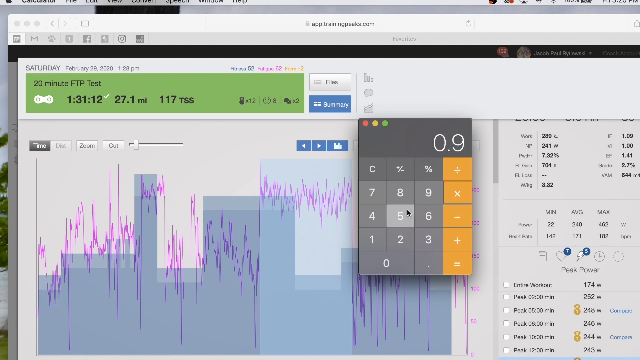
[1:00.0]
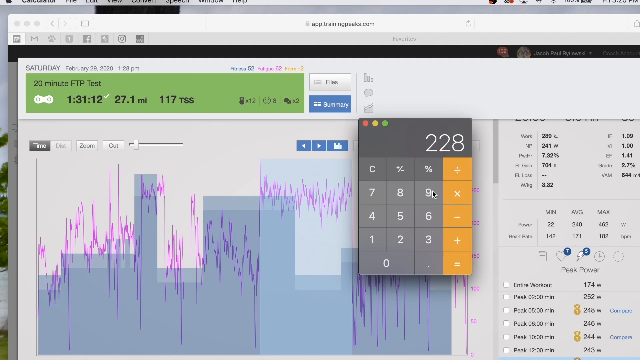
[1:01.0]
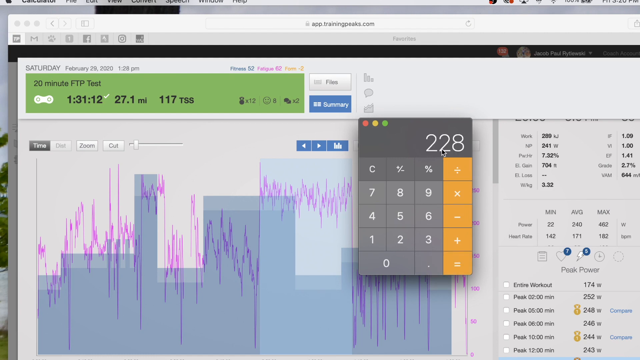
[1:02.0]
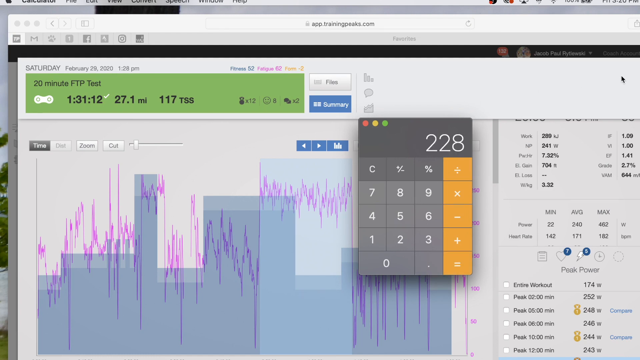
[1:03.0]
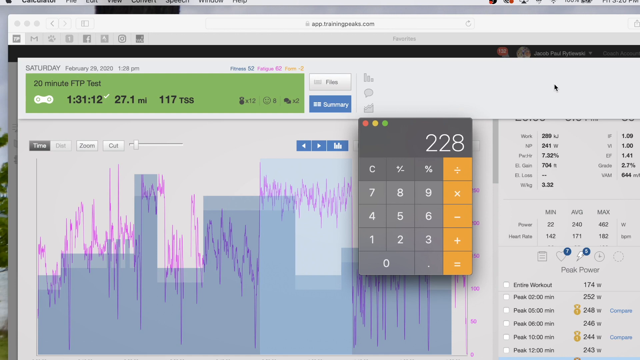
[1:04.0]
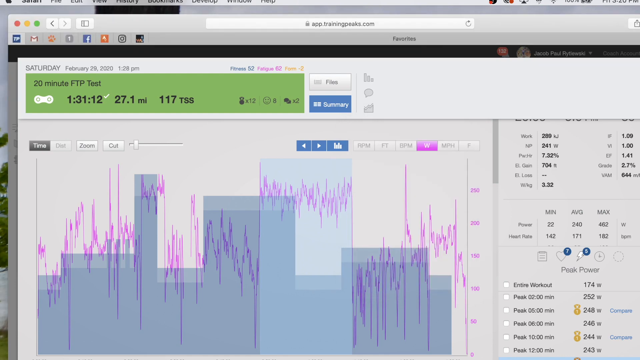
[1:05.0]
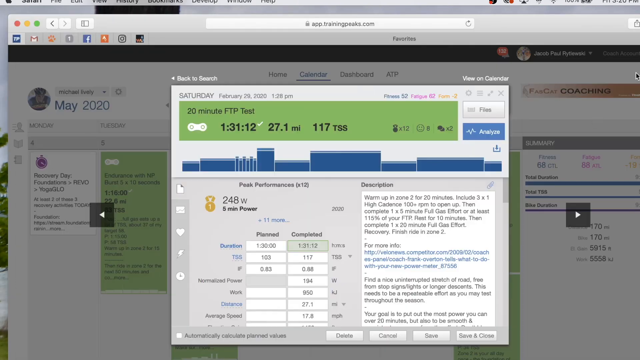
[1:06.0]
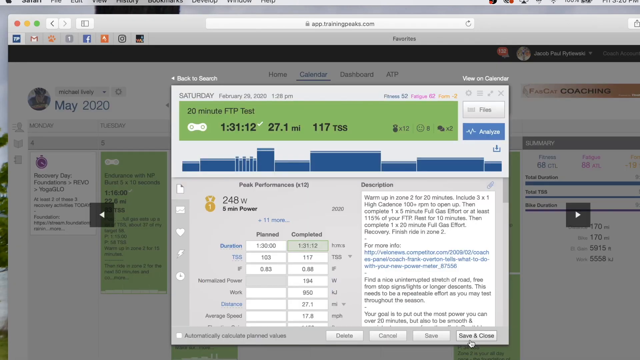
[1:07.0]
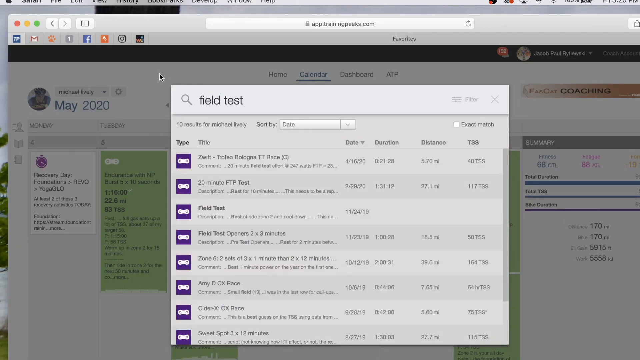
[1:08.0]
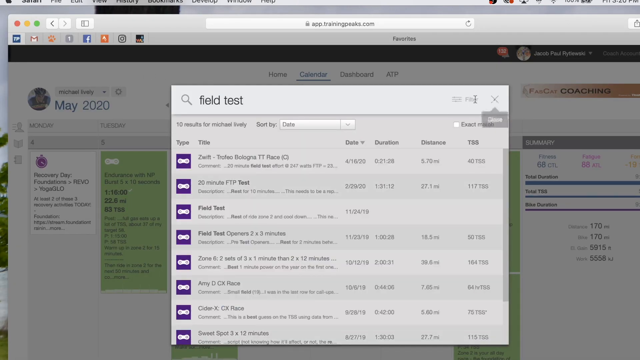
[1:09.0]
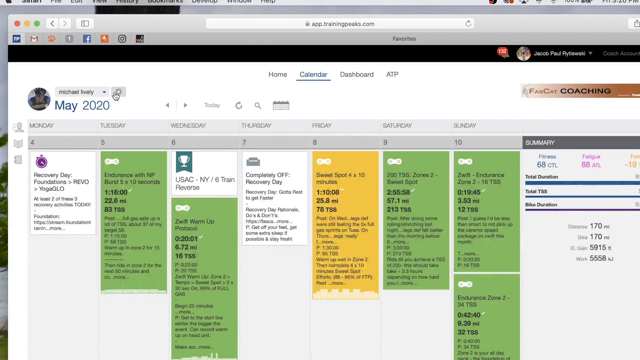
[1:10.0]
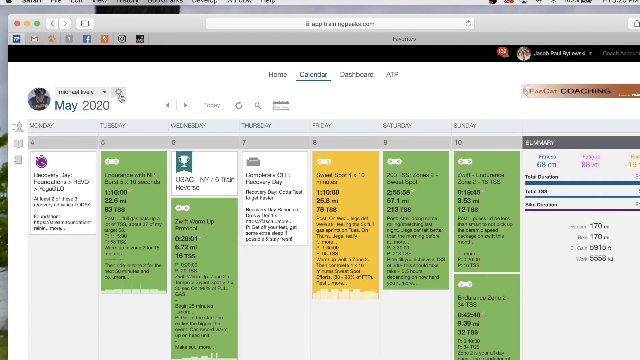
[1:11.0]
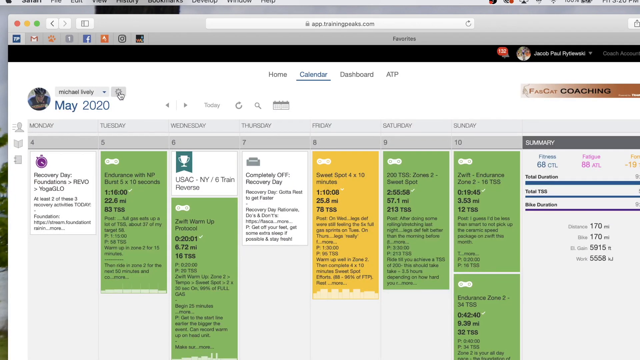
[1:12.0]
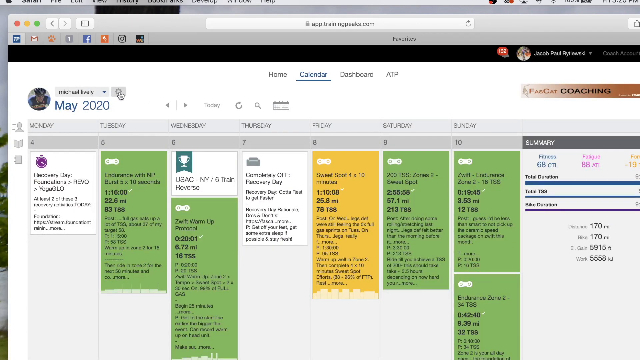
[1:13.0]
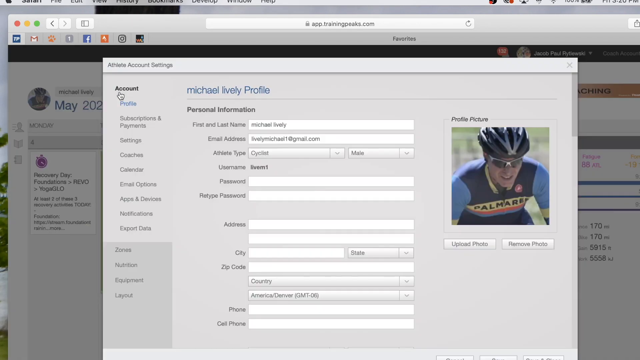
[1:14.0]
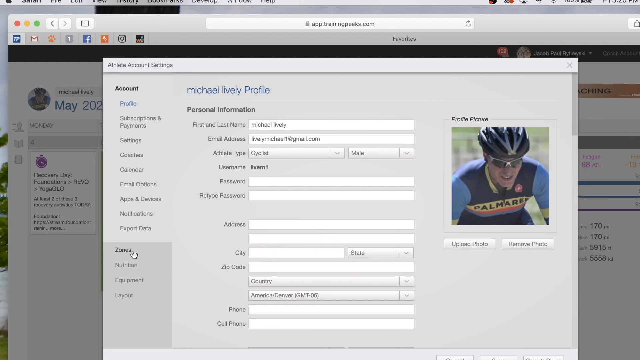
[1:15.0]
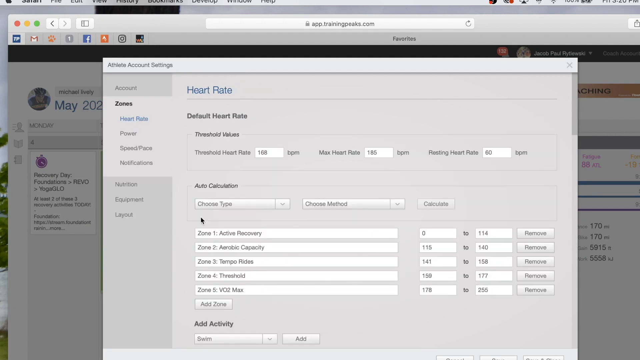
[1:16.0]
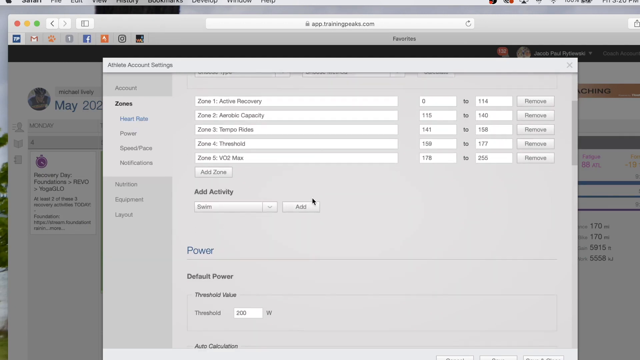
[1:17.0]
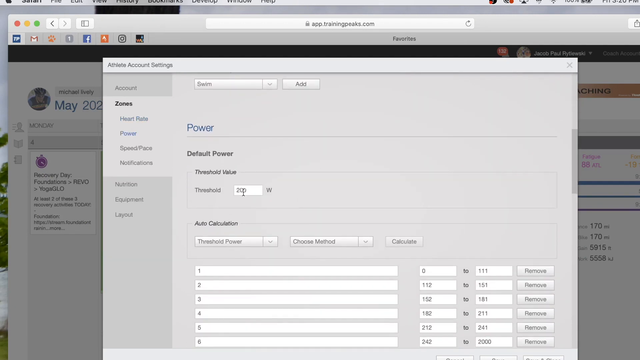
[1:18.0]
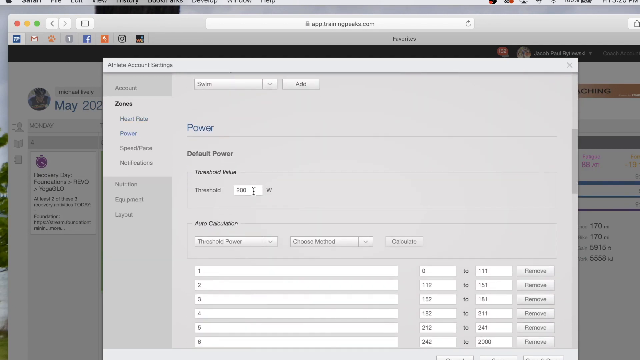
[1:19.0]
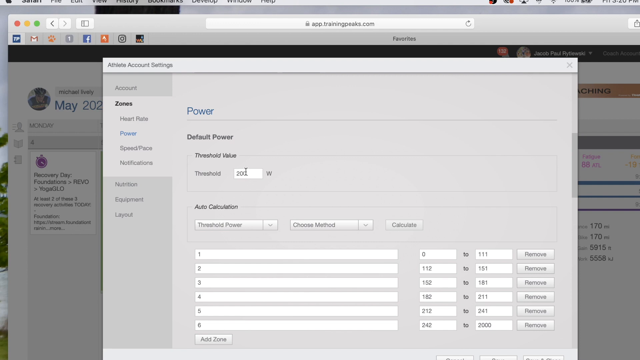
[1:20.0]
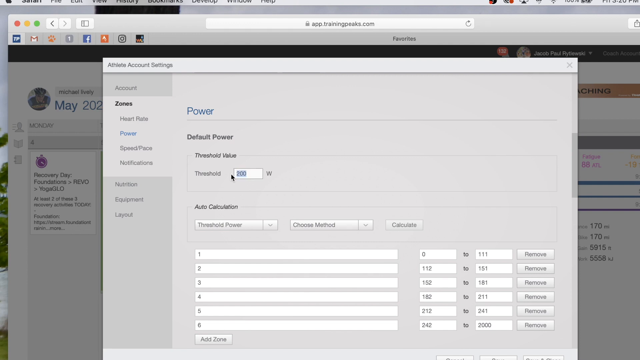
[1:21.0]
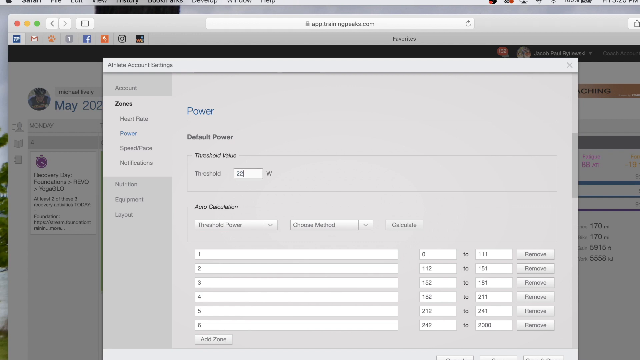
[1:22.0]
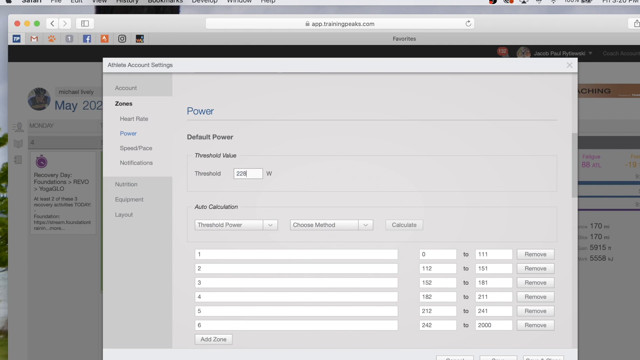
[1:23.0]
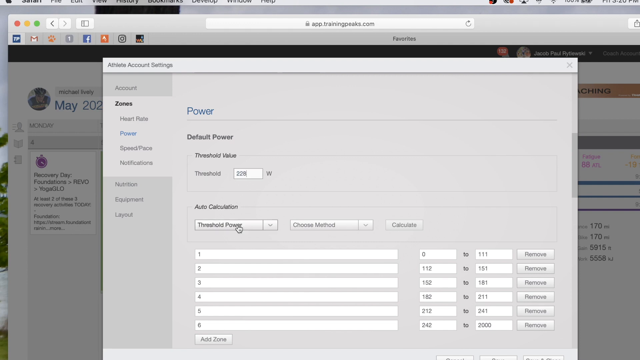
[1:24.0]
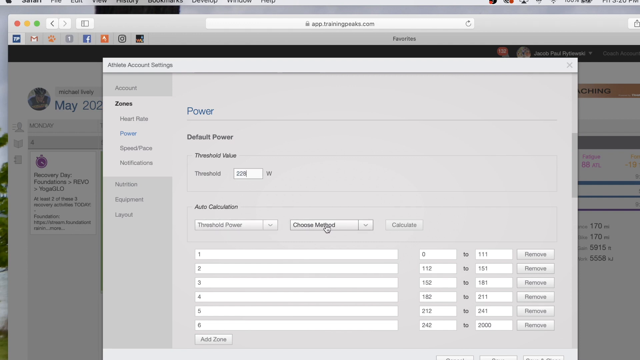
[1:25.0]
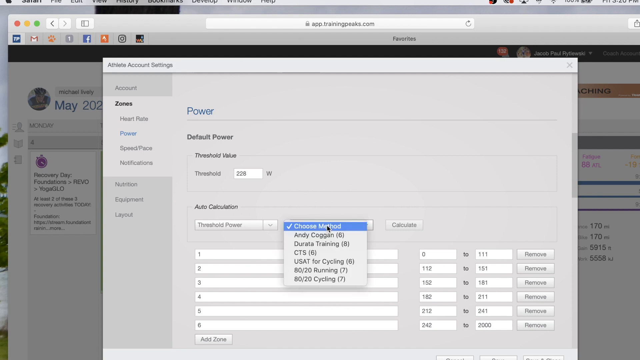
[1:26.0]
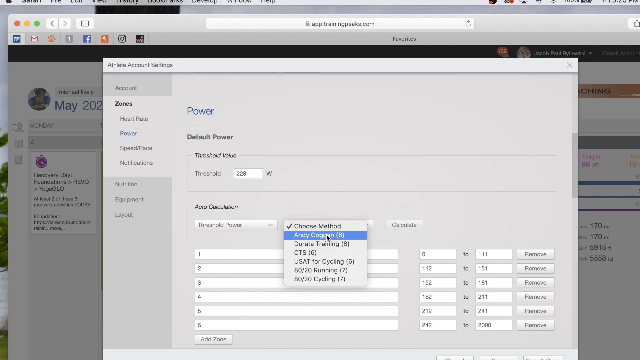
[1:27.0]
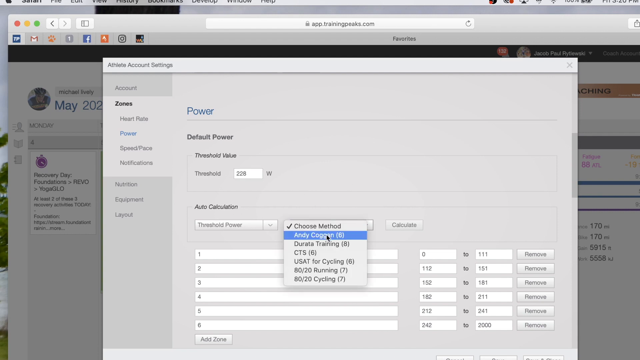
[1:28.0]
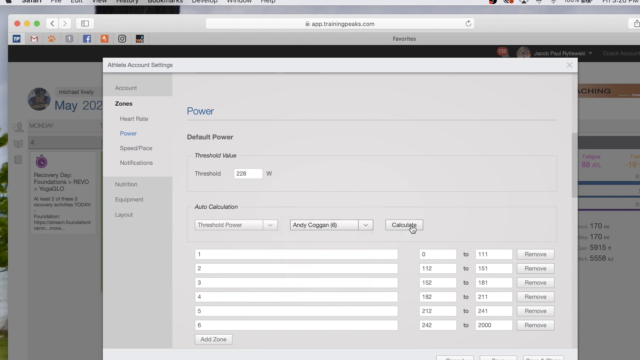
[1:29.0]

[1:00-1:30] Still using the calculator, the user hits the equal button and 228 appears. The cursor moves up to the 228, moves above it, hovers around kind of aimlessly, and clicks something that returns to the original pop-up. The user then scrolls down and brings up a different pop-up with a search icon on the left and "field test" beside it. Below it is a line, with columns for type, title, date, duration, distance and TSS going right. Above this is a small checkbox labeled "exact match". Under the field test it says "10 results for Michael Lively", and there is a sort-by button set to "date". The user clicks the X to close it, then goes over to the profile picture on the left side, with "May 2020" and "Michael Lively". The cursor kind of circles around a small square and pulls up his account settings. The top left says "account", then his name, and below that all his different information, such as city, state and name. On the right side is a profile picture of him riding a bicycle. He clicks another button that goes to heart rate, showing all the different heart rate information below as he scrolls down. He then clicks one of the items, changes it to Andy Cooper, and hits calculate.